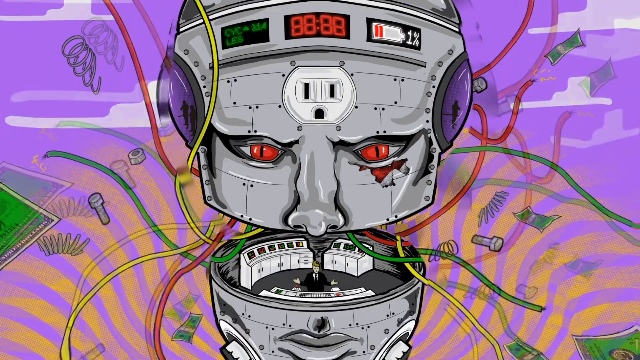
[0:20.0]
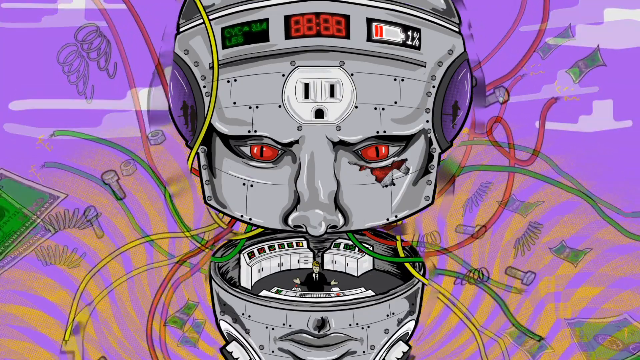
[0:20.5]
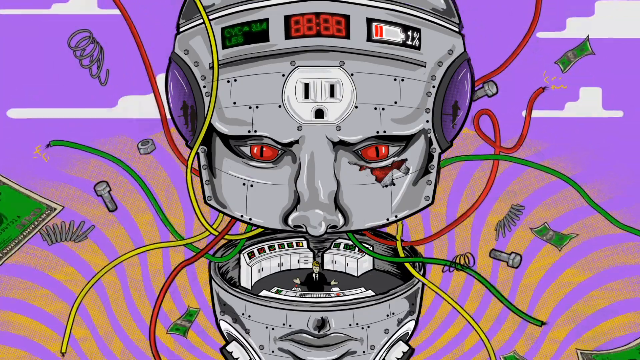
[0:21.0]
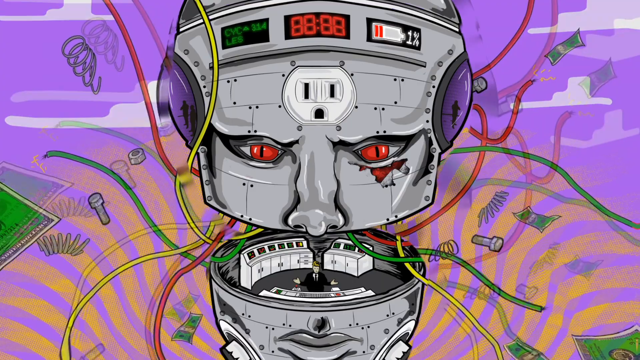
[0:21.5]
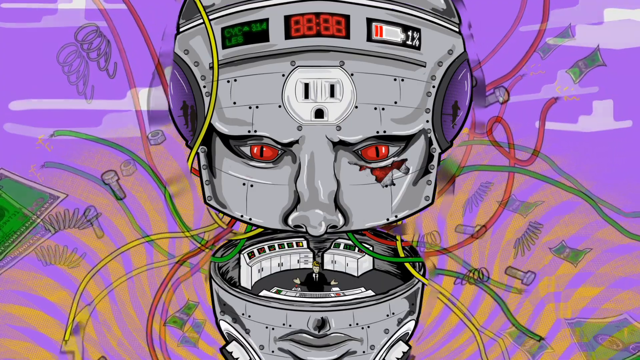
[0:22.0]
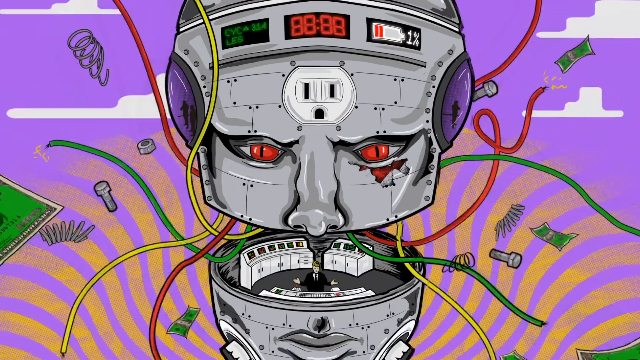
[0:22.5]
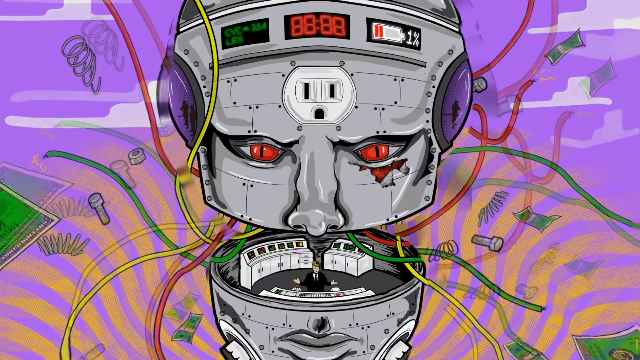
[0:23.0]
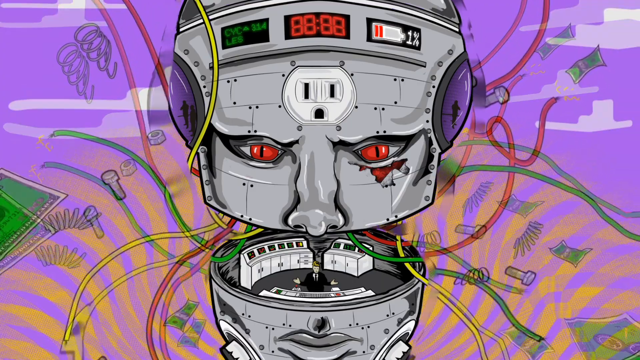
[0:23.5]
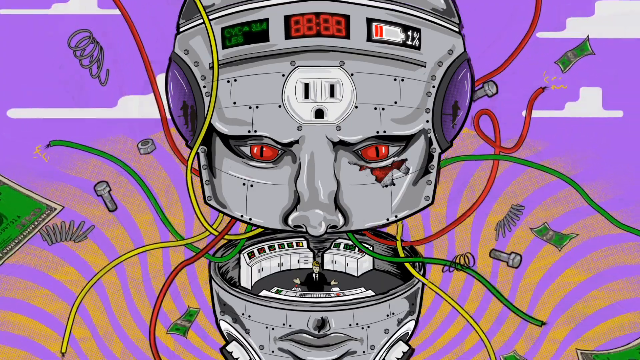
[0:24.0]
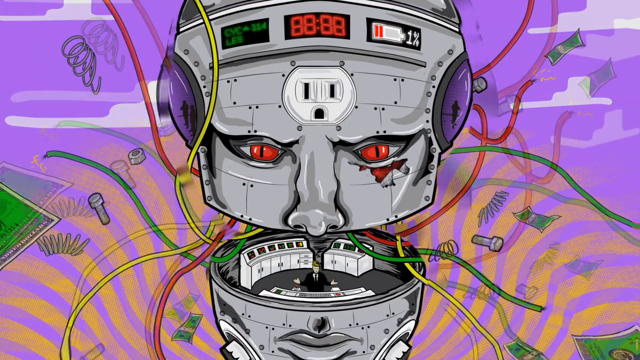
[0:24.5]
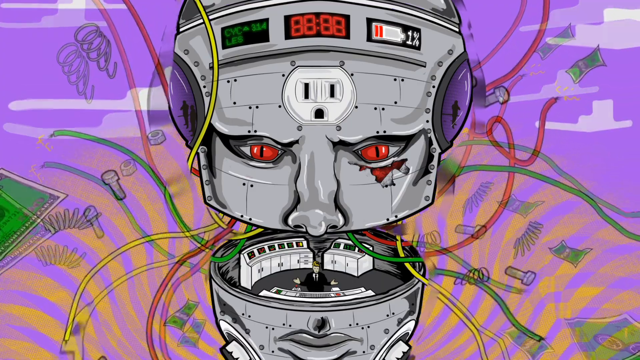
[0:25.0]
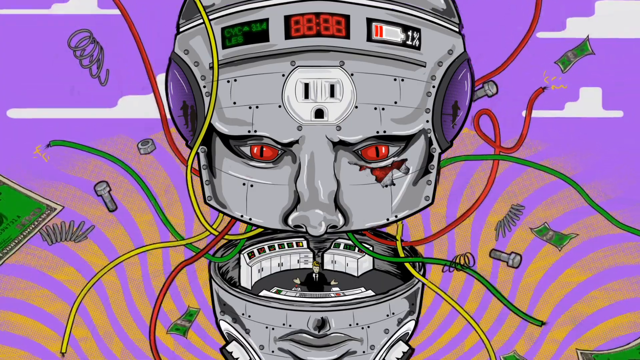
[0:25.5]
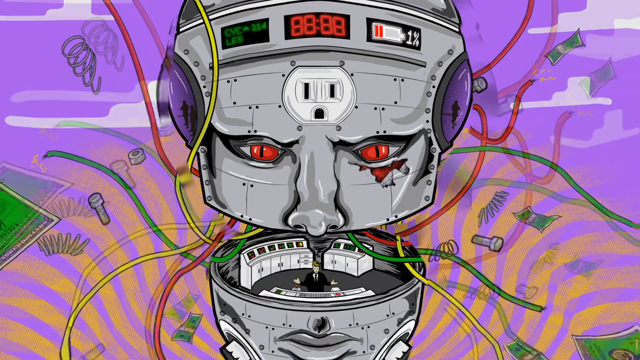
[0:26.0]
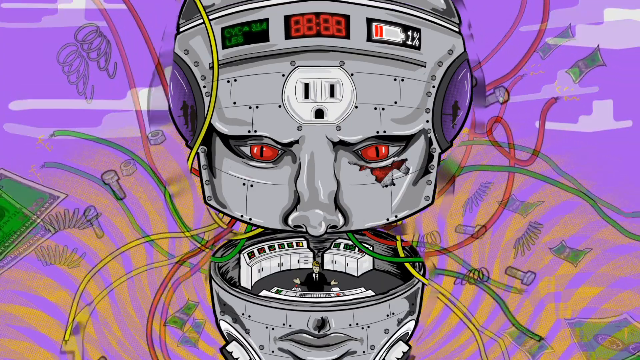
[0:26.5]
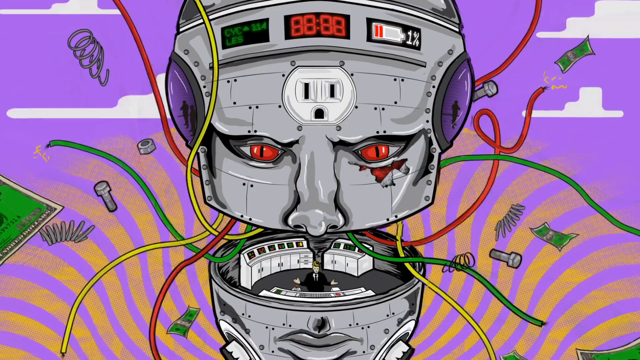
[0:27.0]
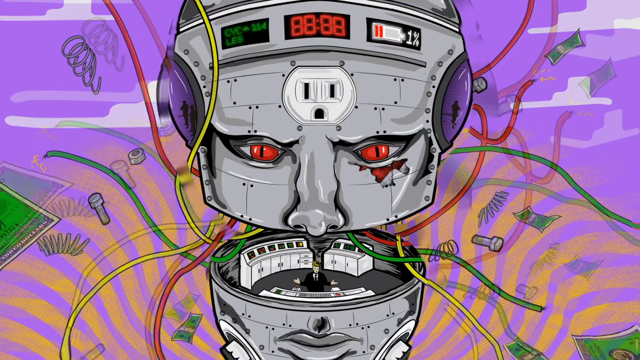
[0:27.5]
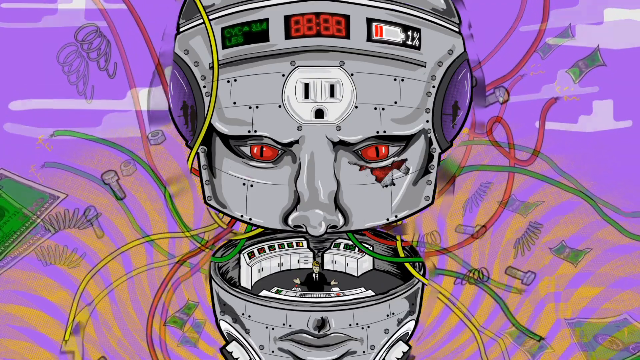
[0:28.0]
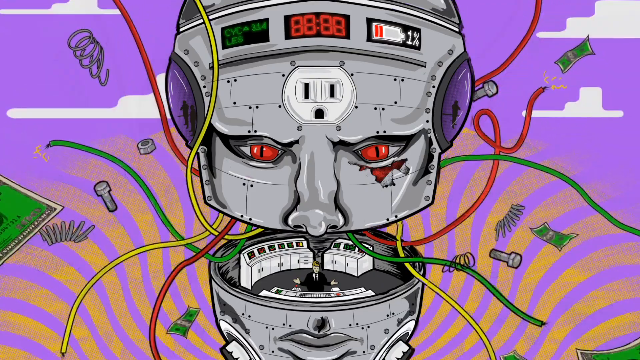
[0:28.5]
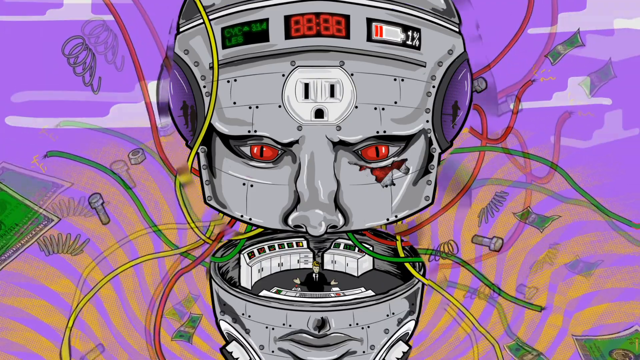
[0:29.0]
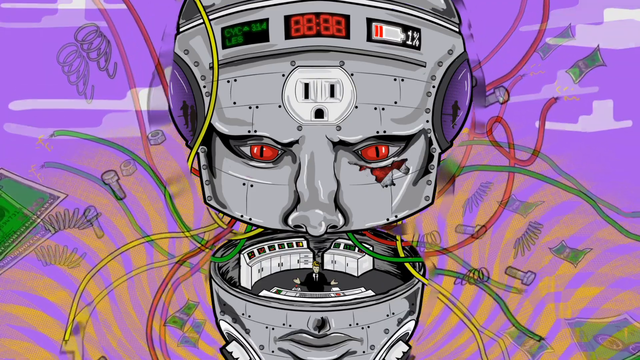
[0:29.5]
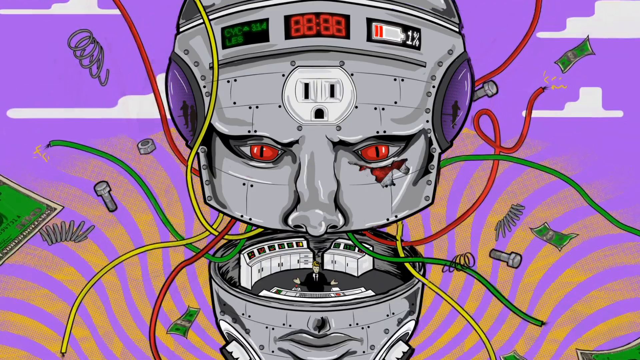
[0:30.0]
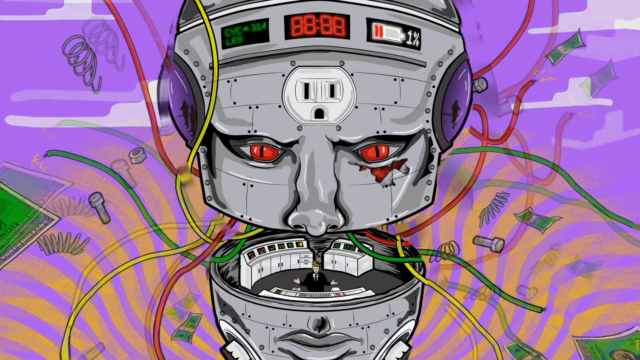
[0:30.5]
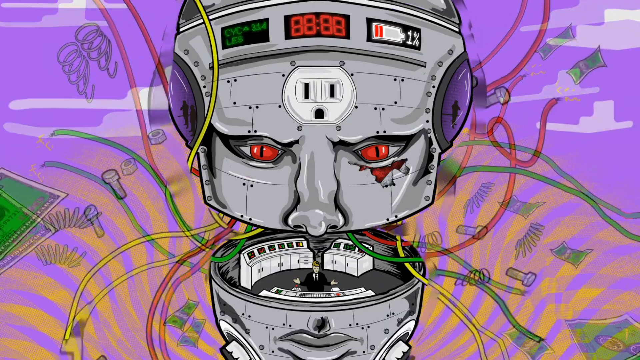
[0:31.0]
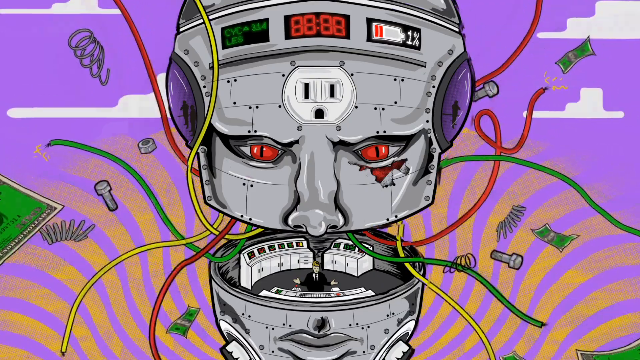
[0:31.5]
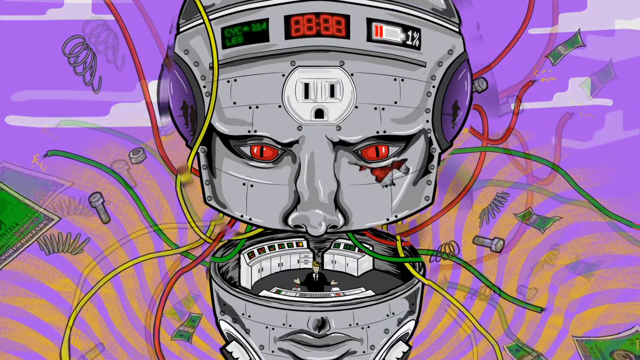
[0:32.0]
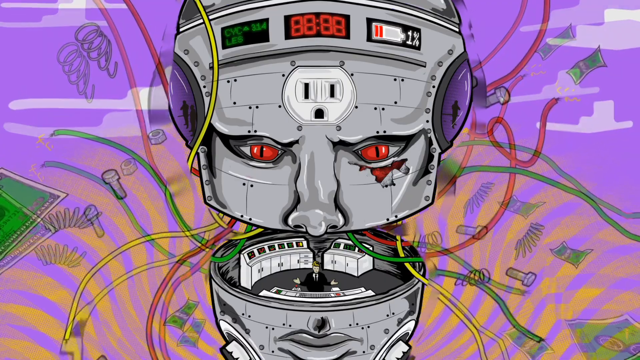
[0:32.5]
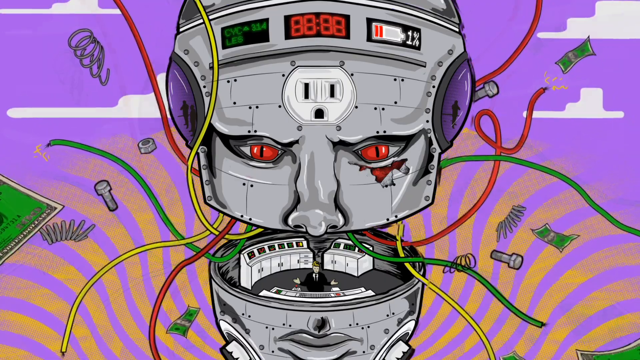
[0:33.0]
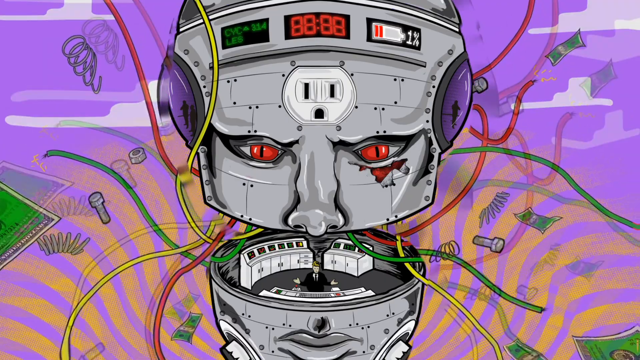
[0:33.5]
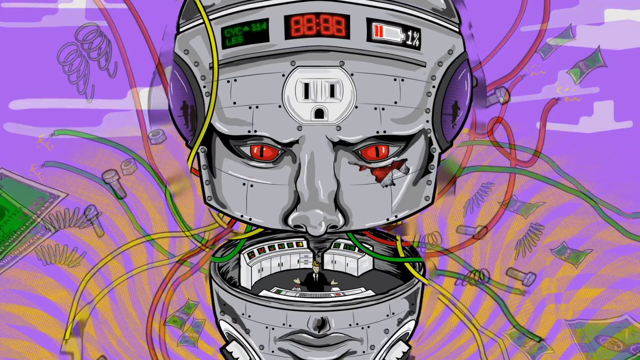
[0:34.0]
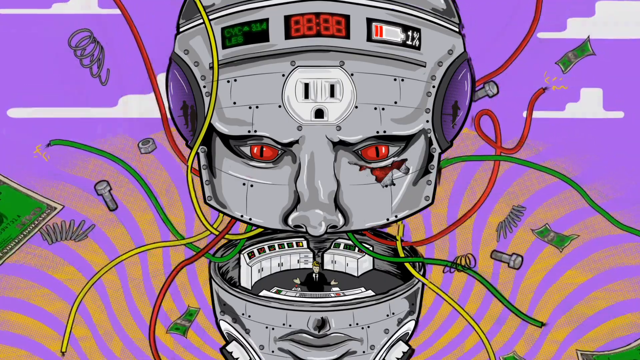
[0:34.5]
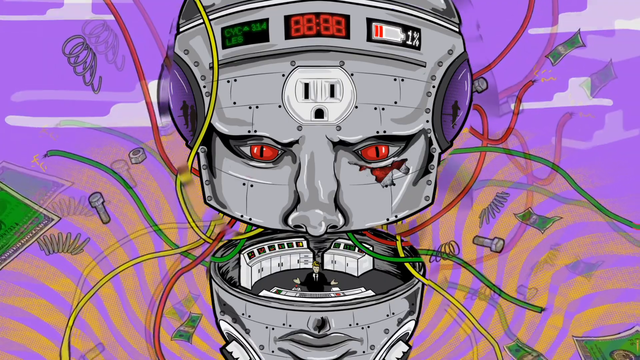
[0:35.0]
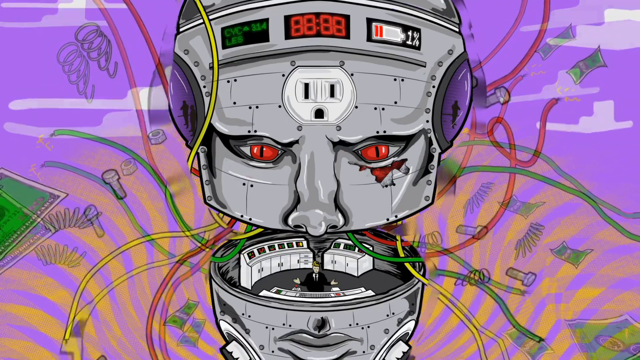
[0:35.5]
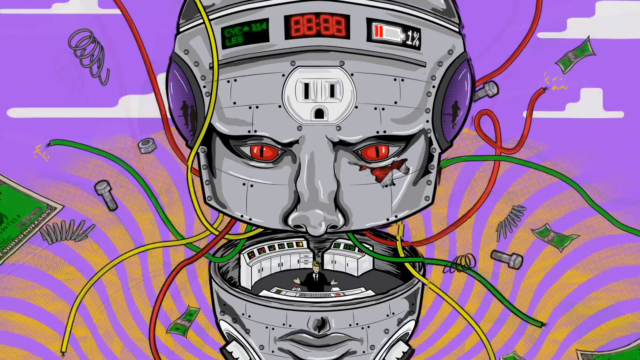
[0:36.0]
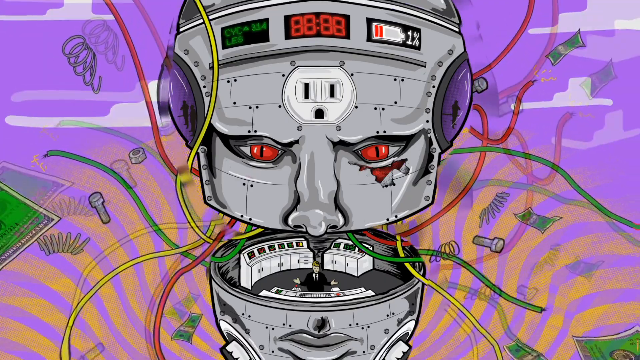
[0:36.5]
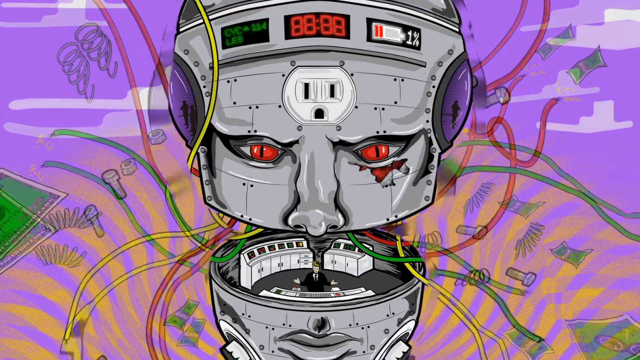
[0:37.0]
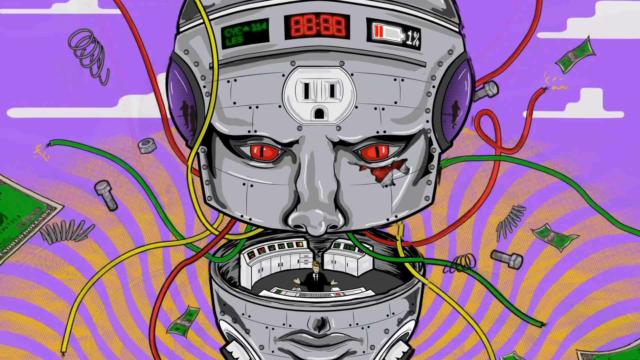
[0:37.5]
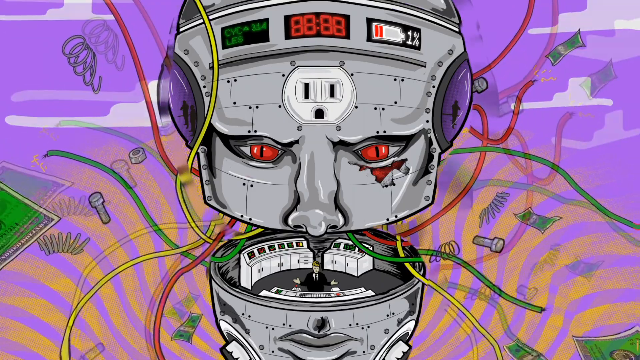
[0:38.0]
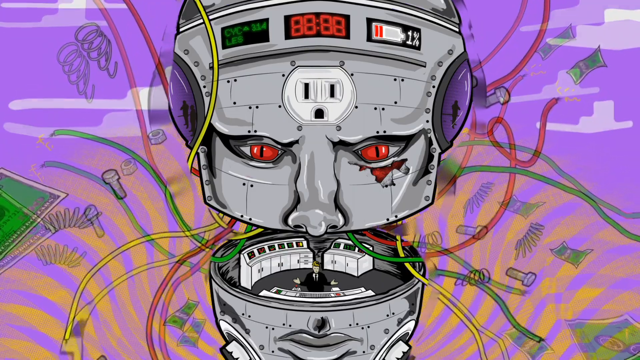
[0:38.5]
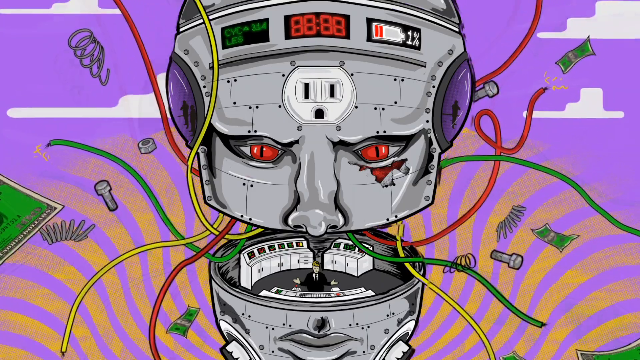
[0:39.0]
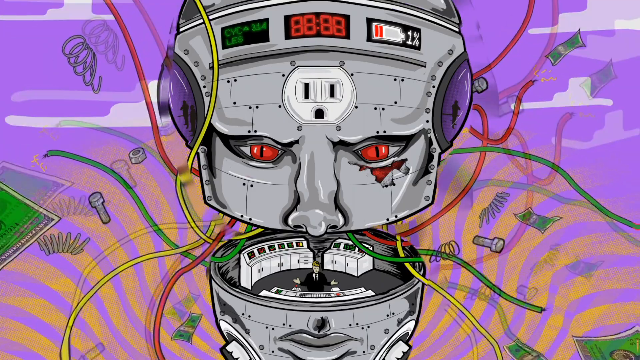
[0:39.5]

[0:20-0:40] The cartoon shows the head of a giant robot that looks like a control room. The head is gray and the eyes are red, with an injury under the eye on the viewer's right. A giant white American-style outlet is in the middle of the head, possibly for charging. At the top in the middle there appears to be a timer reading "88;88". A battery shows 1% power left and reads "314 cycles". Yellow wavy lines move in a counterclockwise cycle, along with springs, bolts, washers and some dollar bills. Red, green and yellow wires come out of the robot's head, with a little electricity coming out of their ends. A man in a black suit stands in the control room facing out of the robot's head with his hands facing up, looking like he is standing in front of a control panel.